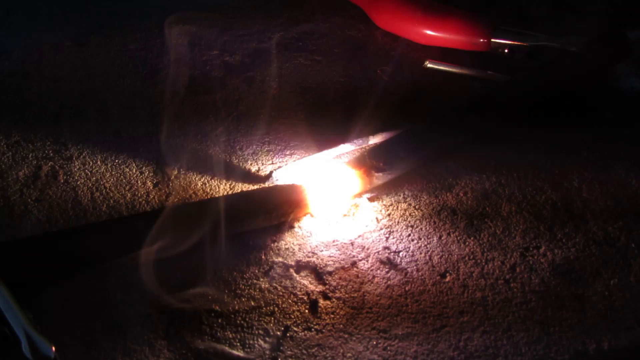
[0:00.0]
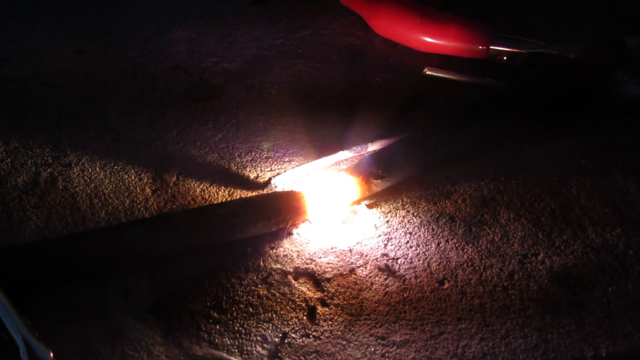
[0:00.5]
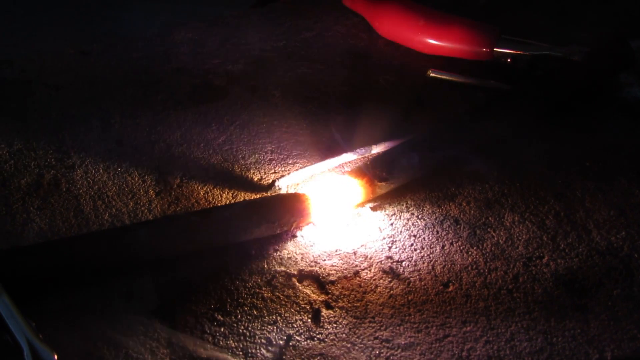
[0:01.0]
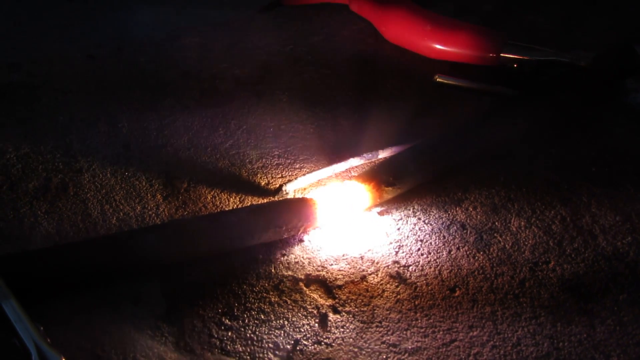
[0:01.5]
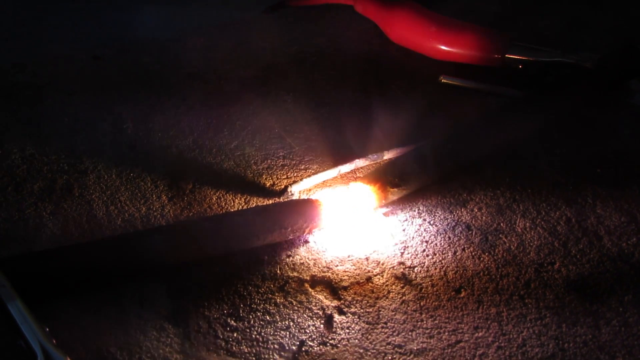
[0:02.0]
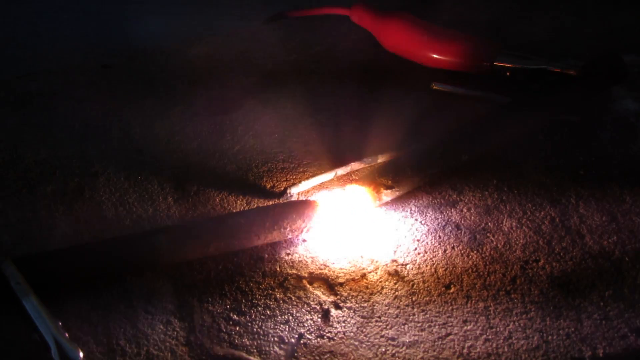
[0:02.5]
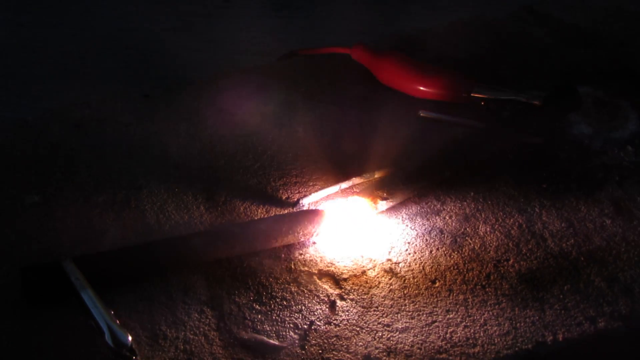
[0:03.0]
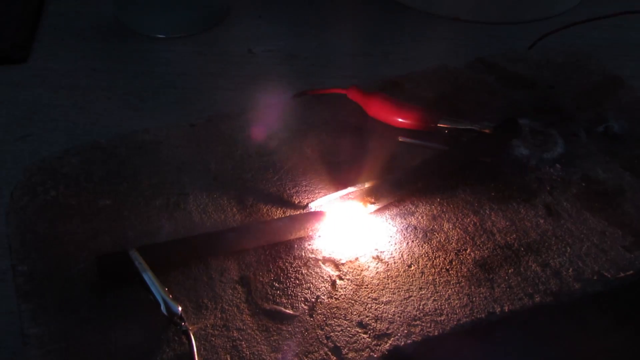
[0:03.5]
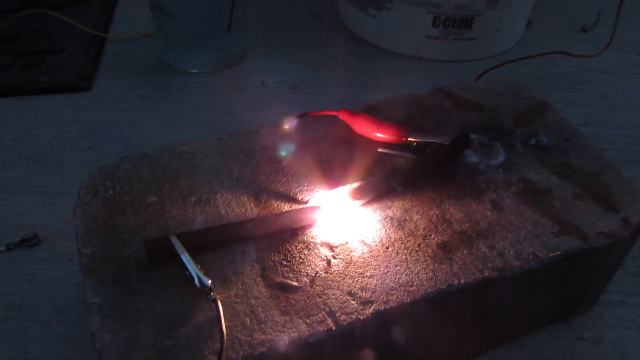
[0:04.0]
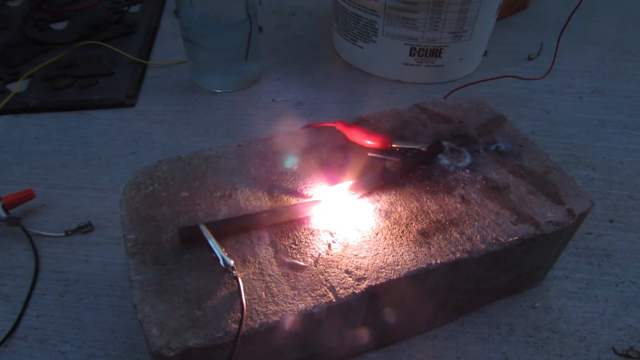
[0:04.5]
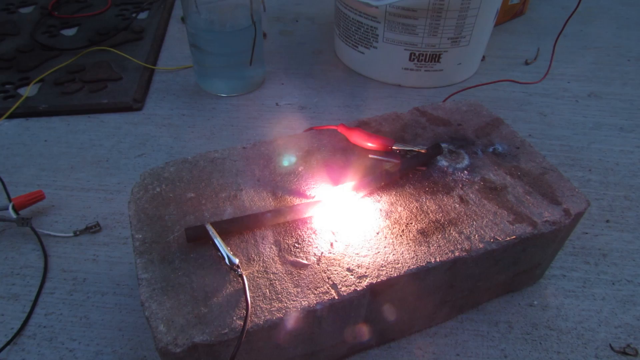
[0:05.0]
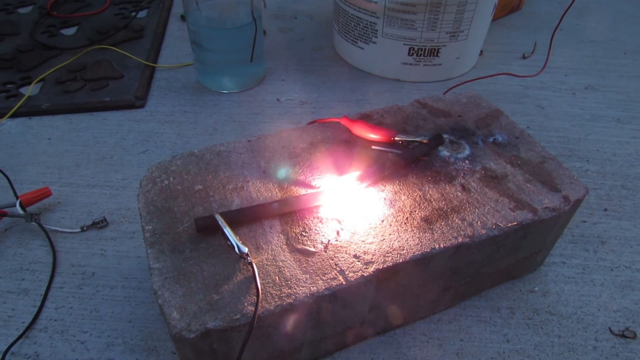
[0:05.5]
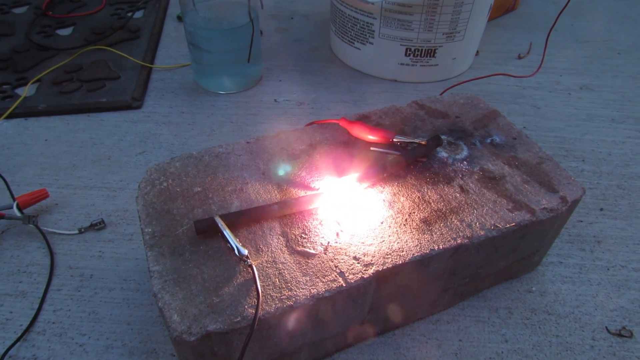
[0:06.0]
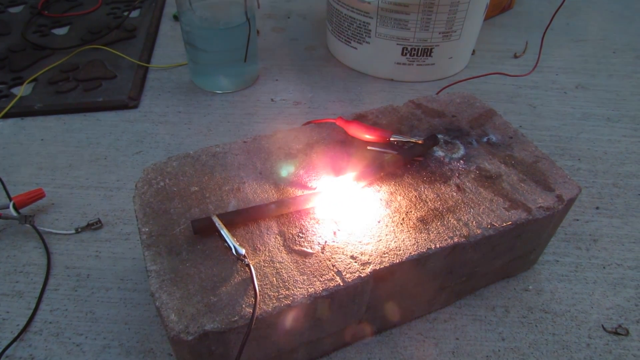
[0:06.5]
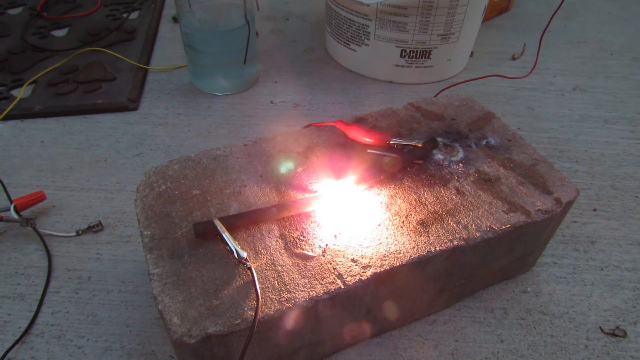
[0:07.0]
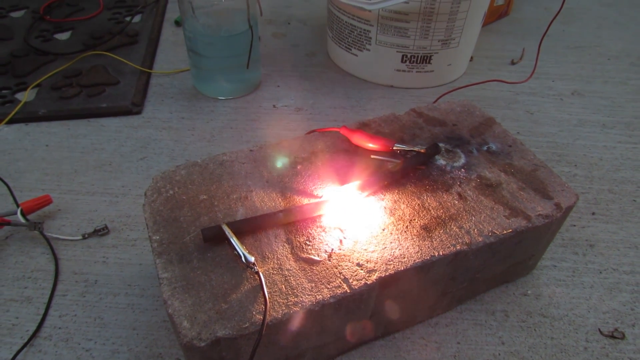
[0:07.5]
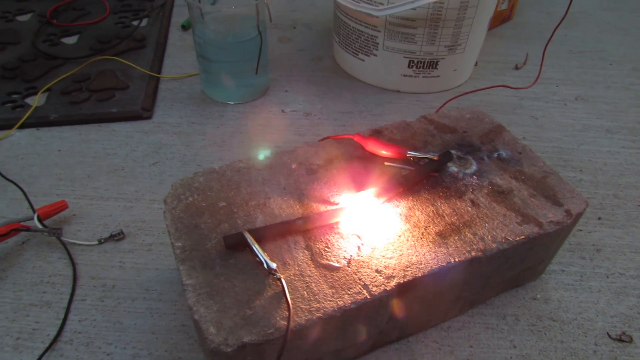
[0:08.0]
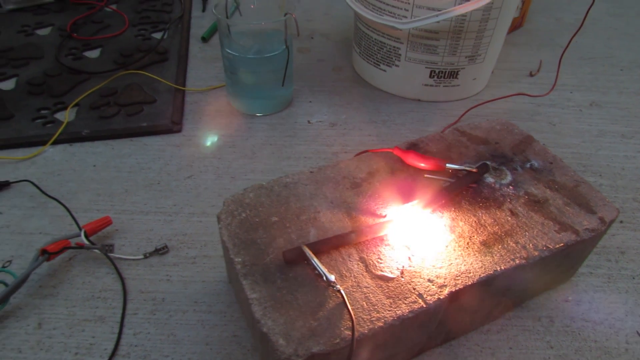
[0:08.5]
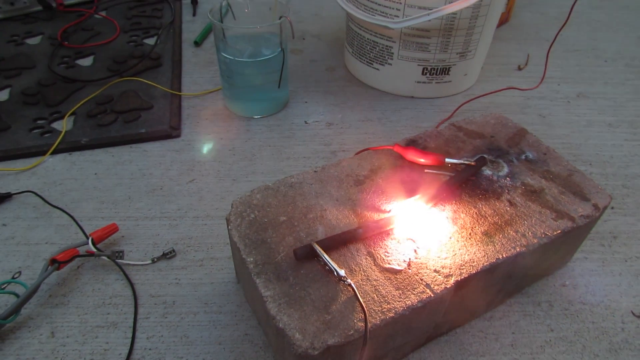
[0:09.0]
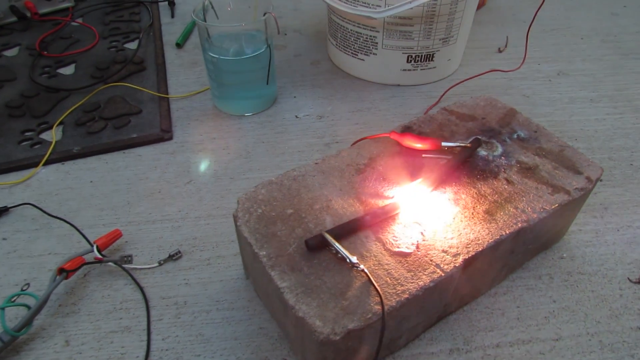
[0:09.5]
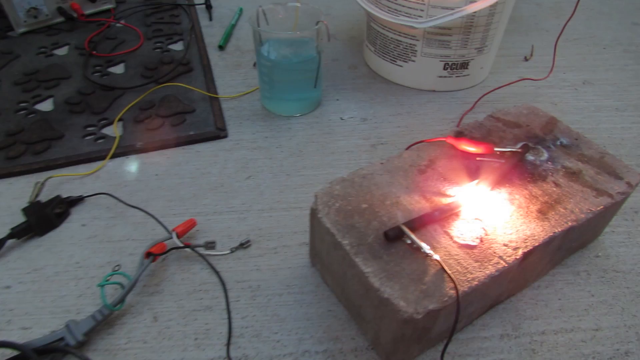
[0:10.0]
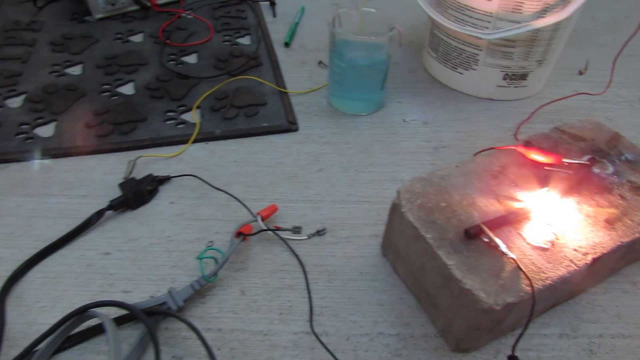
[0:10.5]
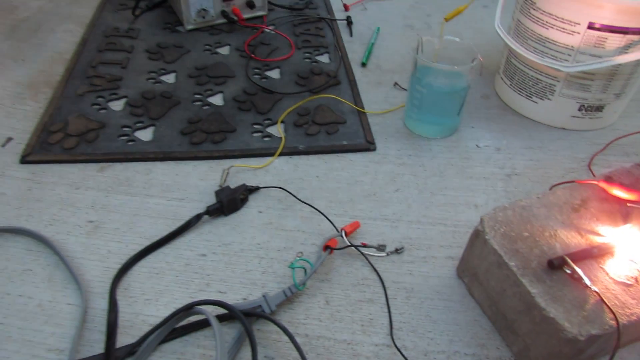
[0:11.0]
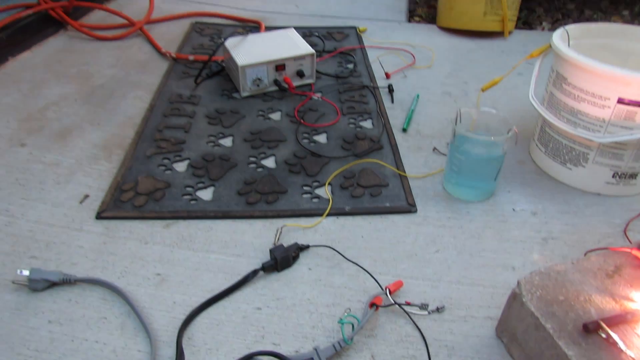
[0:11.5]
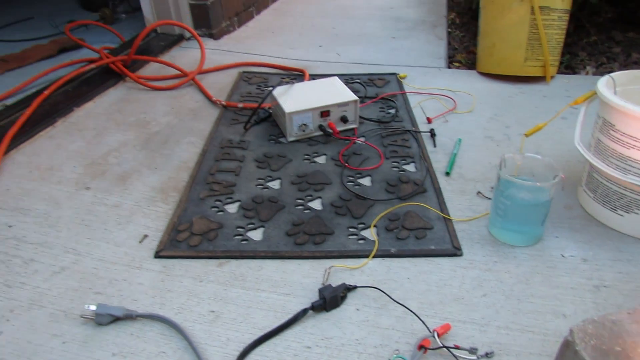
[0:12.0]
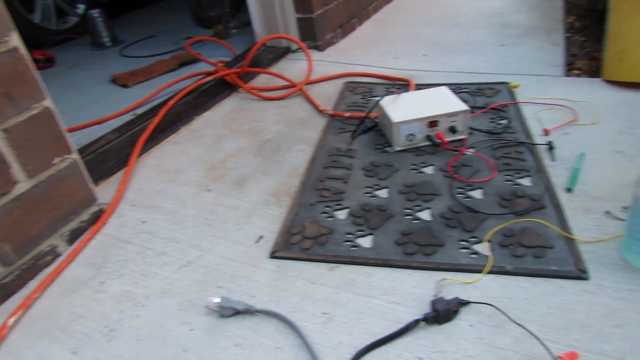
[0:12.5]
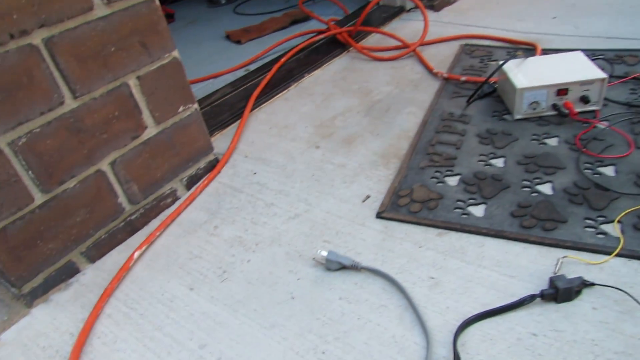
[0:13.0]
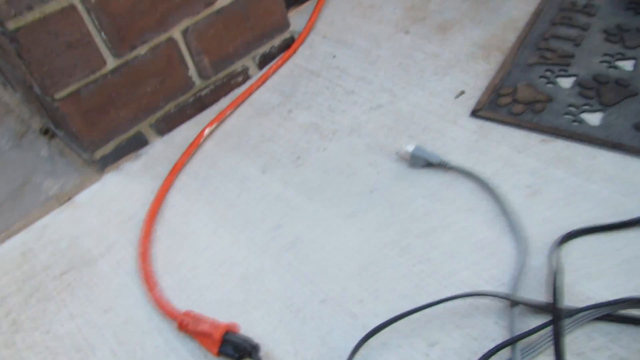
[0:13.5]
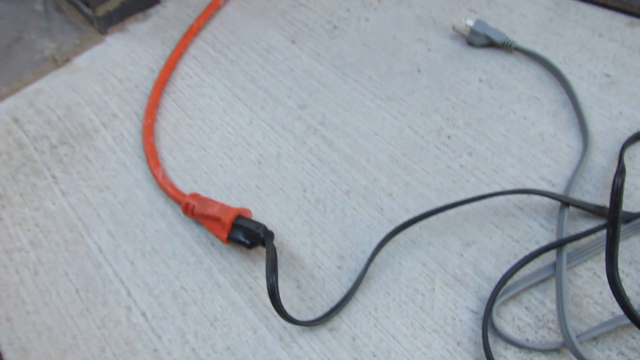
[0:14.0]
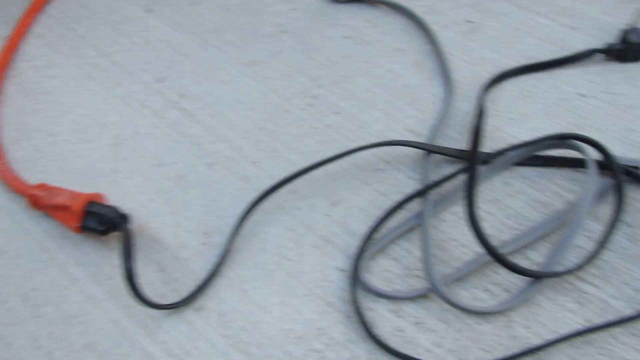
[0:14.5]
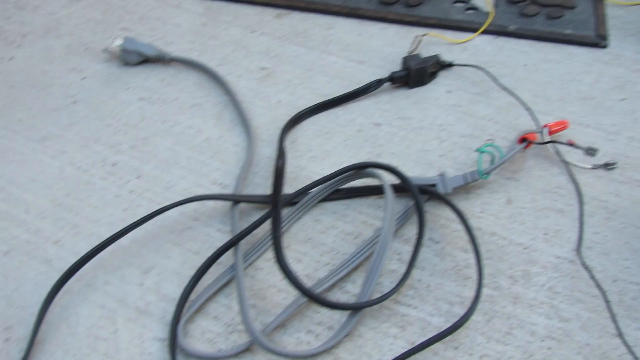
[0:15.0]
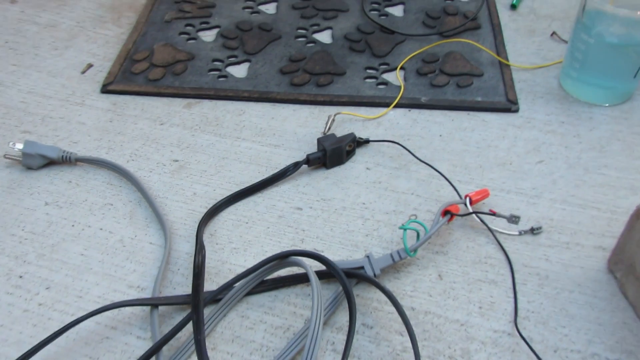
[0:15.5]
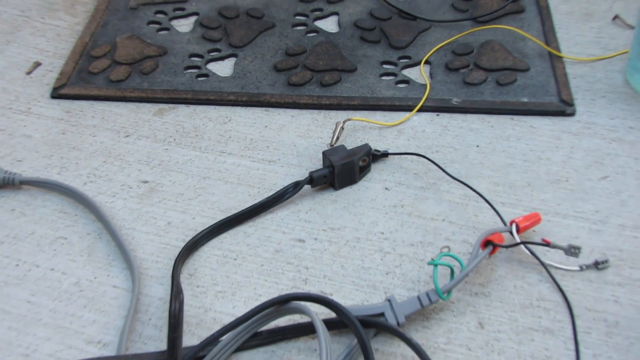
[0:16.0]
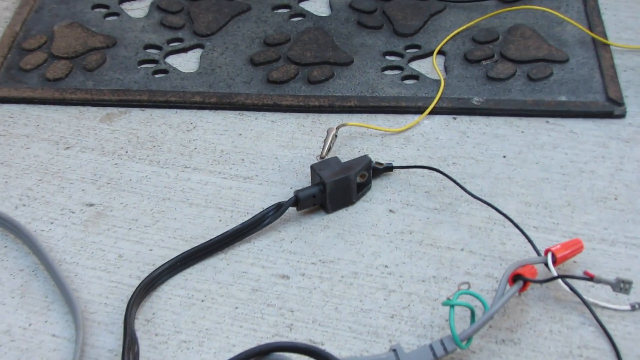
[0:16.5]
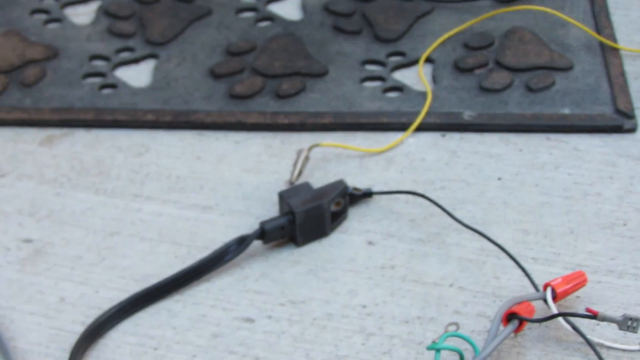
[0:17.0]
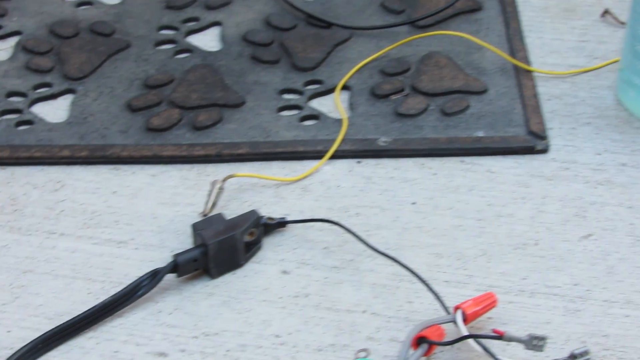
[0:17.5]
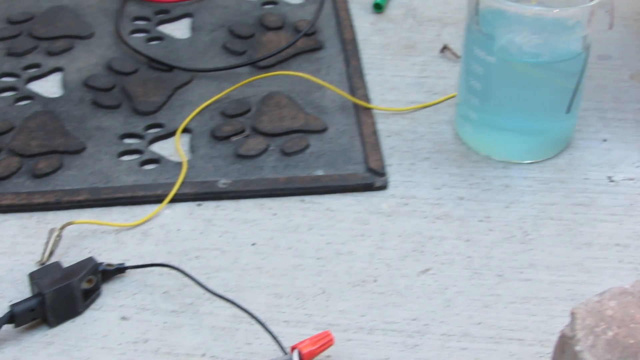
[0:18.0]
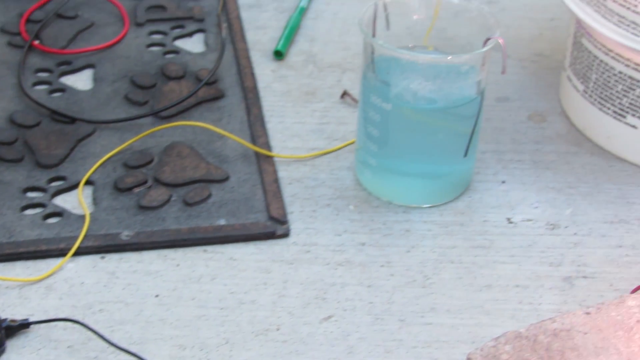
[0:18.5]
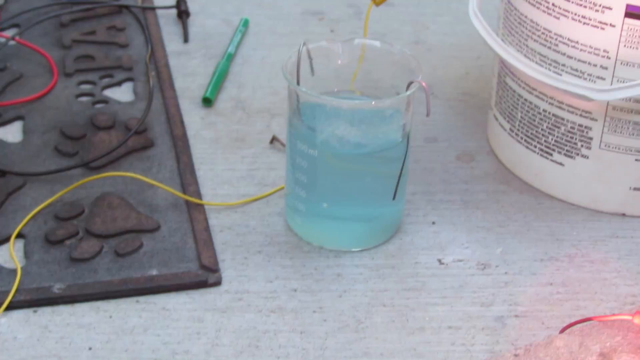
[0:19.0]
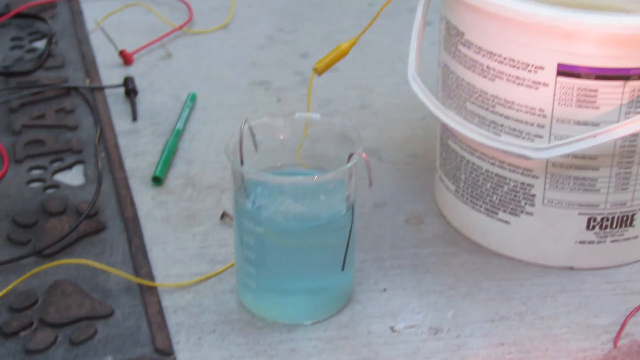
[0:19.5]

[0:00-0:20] An outdoor scene at night shows a bright light in the middle of the screen, coming from a pole placed at the bottom left and angled toward the center; a red object is in the top right corner. The light glows as the camera zooms out to a bigger scene, revealing two objects on a brick: one seems to be a red tool and the other is like a lighter. Several other objects surround the brick: a light bucket at the top, and to its left a glass of blue liquid with a yellow cork kind of connected to it. A red clip is on a cord on the left-hand side, a purple-black mat is in the top left corner, and in the top right corner a red wire runs from the brick to the top. As the light keeps glowing, the camera moves left, revealing more of the black mat and the red clip on the wire. It seems to go around the brick but continues further left, revealing a black wire connected to other wires. The camera zooms toward the black mat, where there is a white box of some sort with red and black cords connected to it; red cords run toward the left of the screen, a bit tangled. Moving further left, part of a brick wall appears, then the camera goes to the white concrete ground, where more of an orange wire is revealed. To the right of that cord are a gray cord and a few black cords. Following the gray cord down shows that the orange cord is connected to a black cord, and more gray and black cords lie on the ground. The camera returns to the mat and shows the container with liquid to the right of it, then zooms in on the connection between two black cords on the ground. While zoomed in, it moves right until the container with the blue liquid is in full view, along with part of a white can, and then moves toward the white bucket.